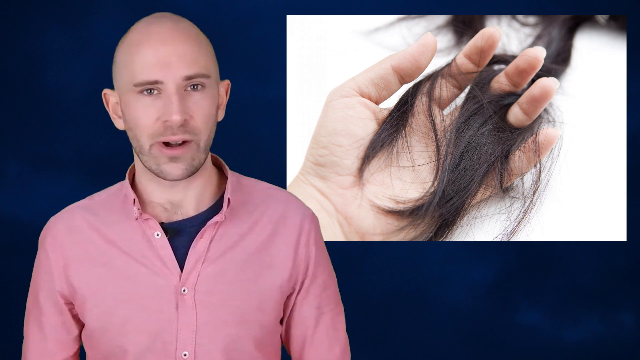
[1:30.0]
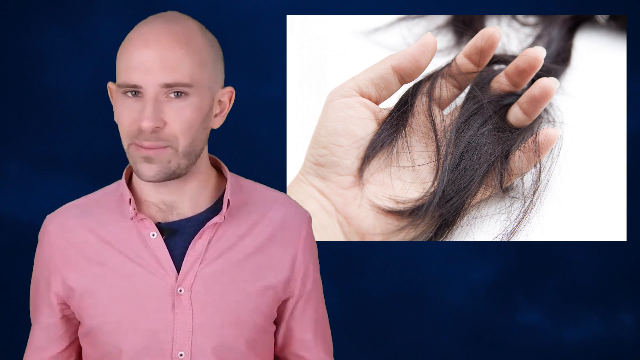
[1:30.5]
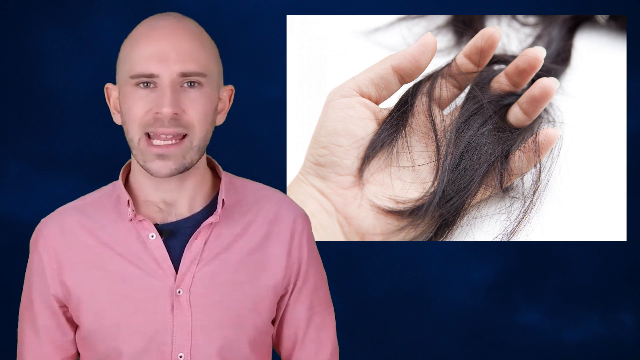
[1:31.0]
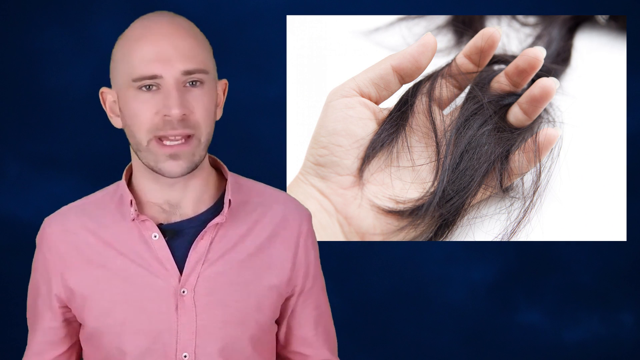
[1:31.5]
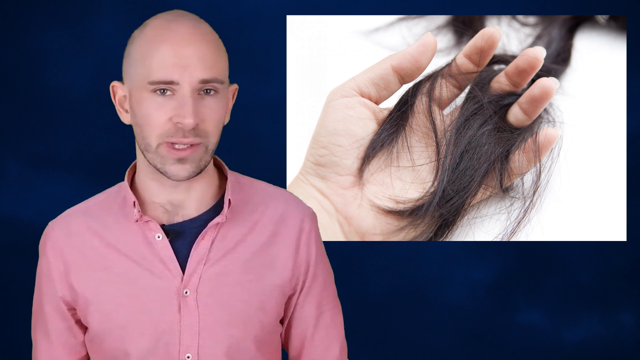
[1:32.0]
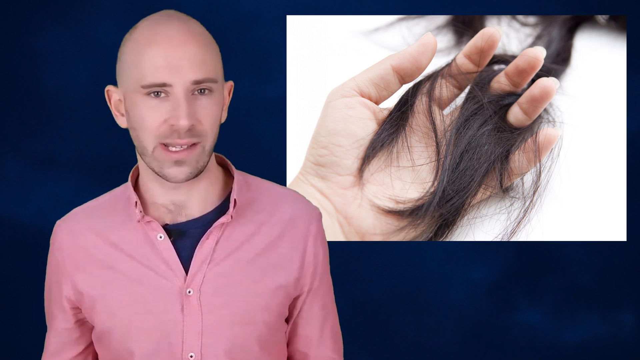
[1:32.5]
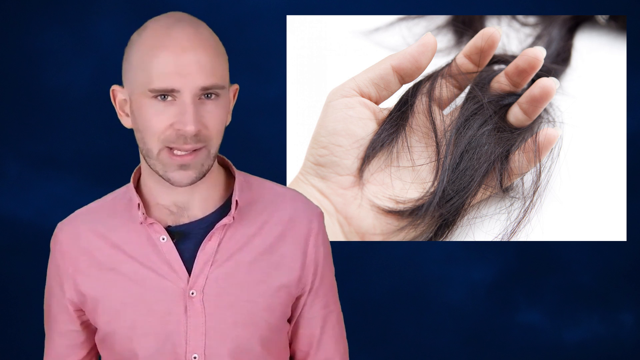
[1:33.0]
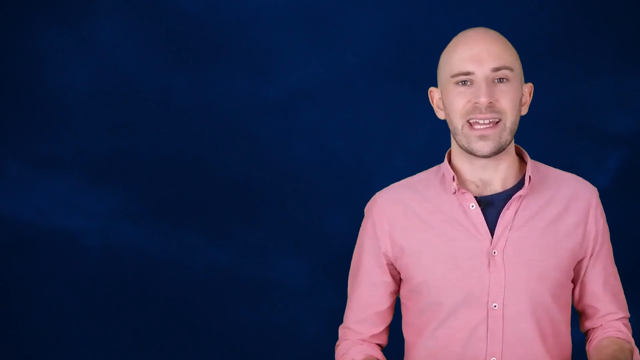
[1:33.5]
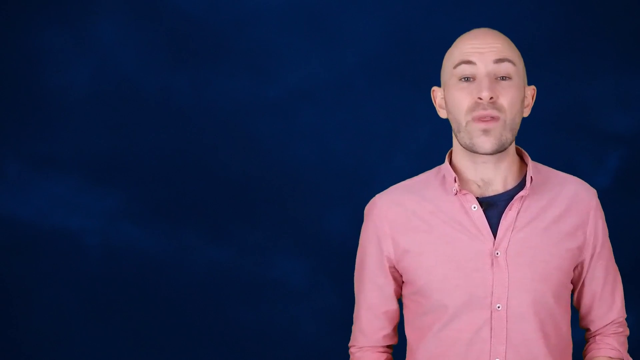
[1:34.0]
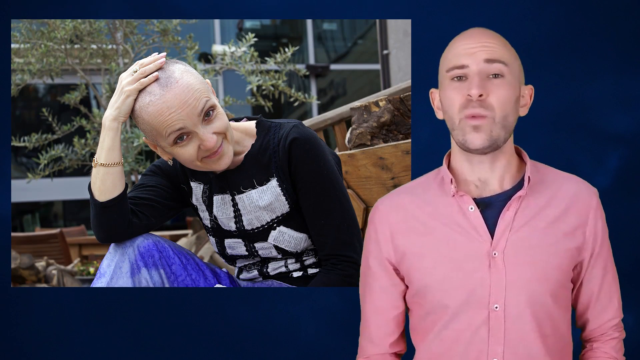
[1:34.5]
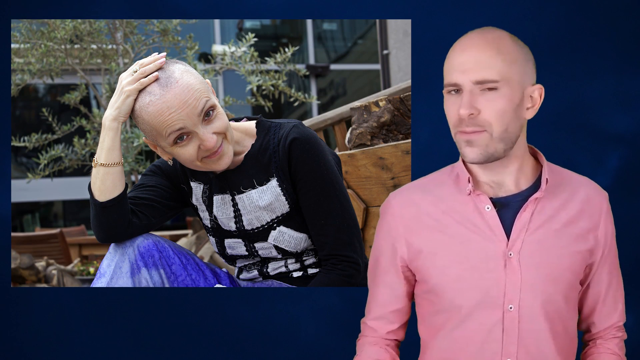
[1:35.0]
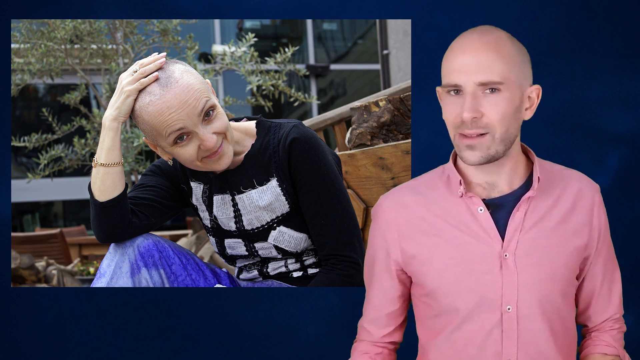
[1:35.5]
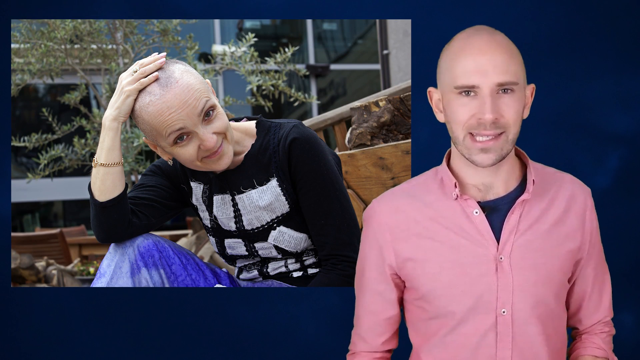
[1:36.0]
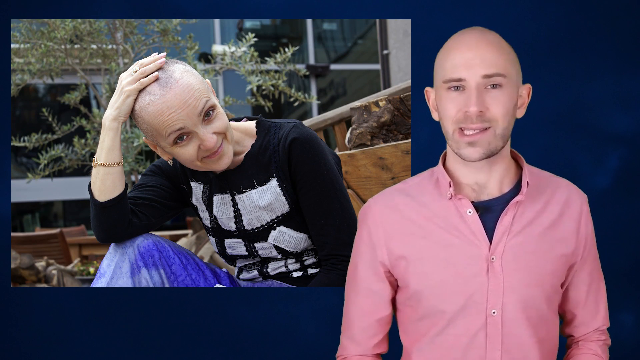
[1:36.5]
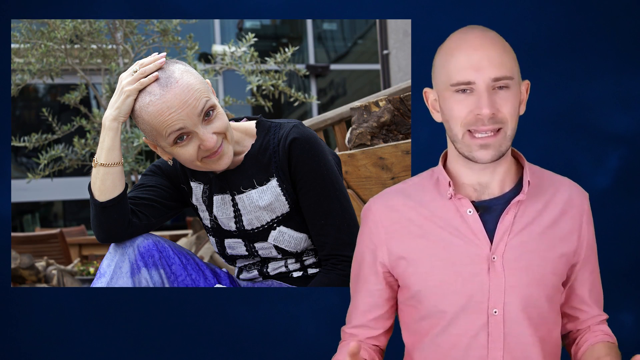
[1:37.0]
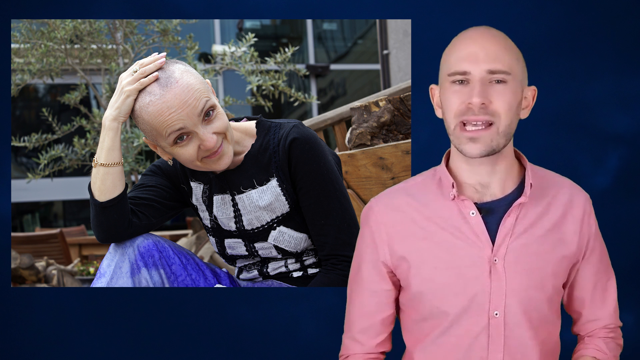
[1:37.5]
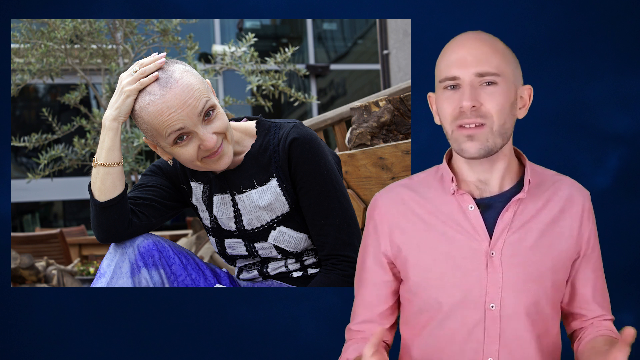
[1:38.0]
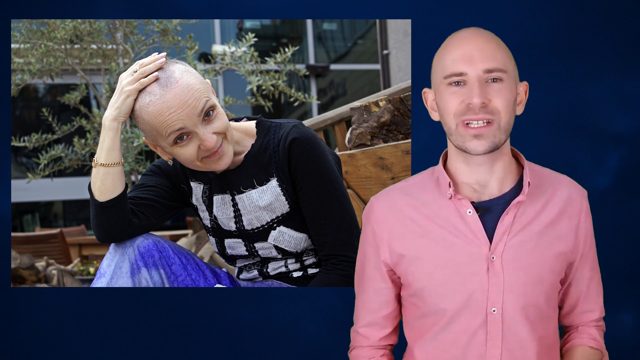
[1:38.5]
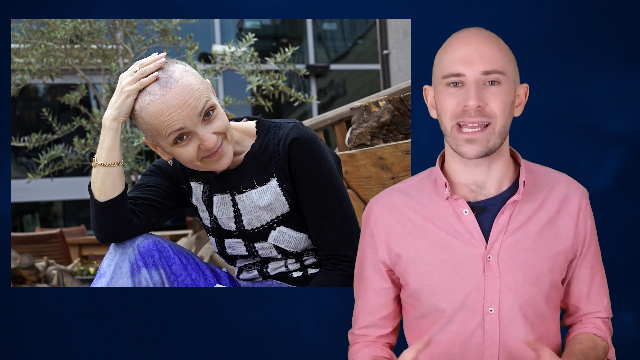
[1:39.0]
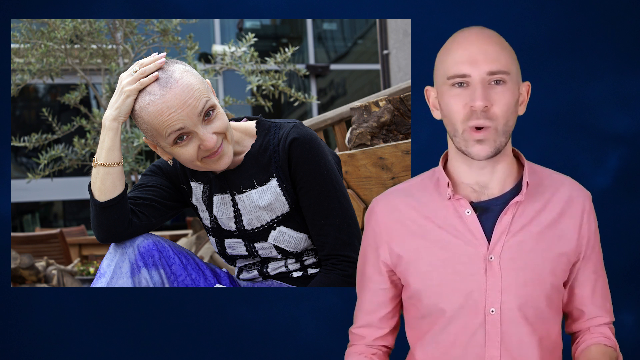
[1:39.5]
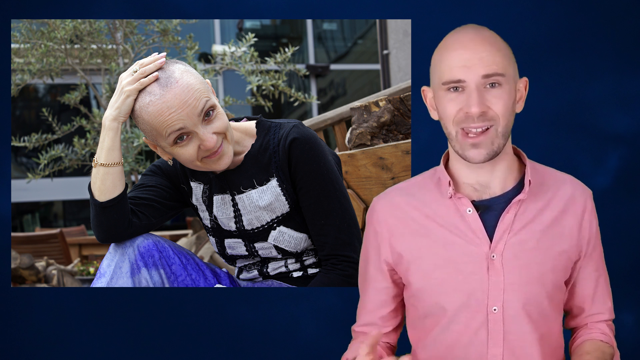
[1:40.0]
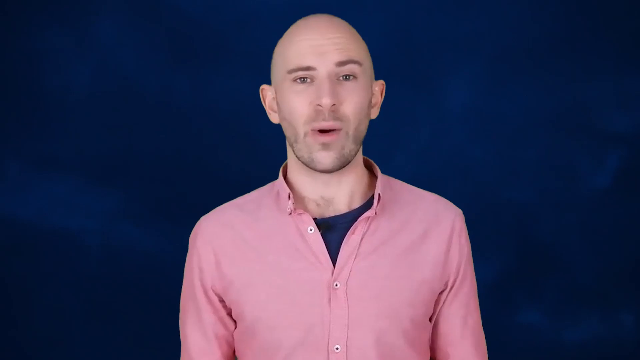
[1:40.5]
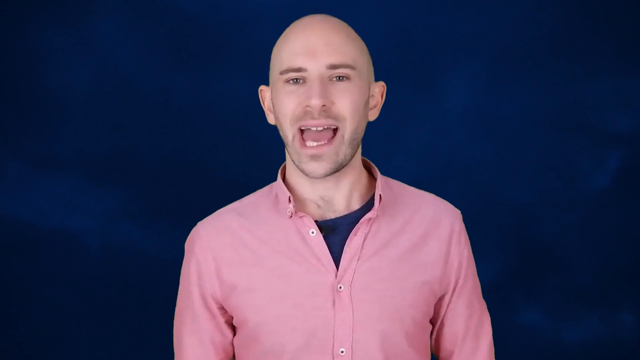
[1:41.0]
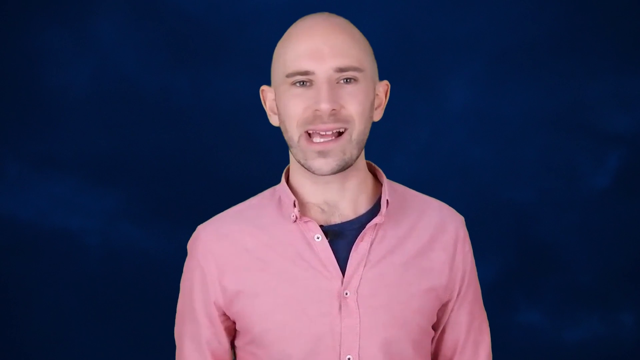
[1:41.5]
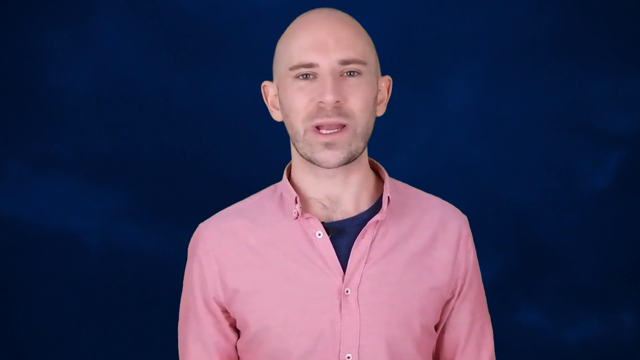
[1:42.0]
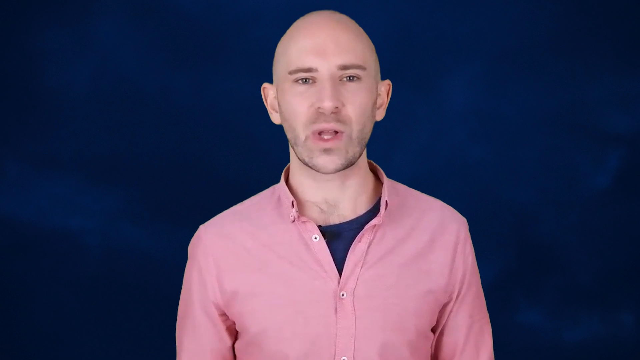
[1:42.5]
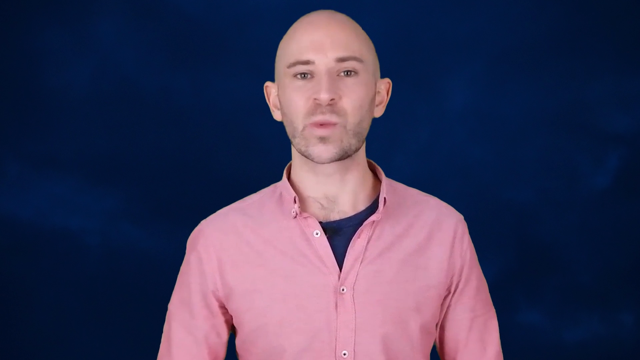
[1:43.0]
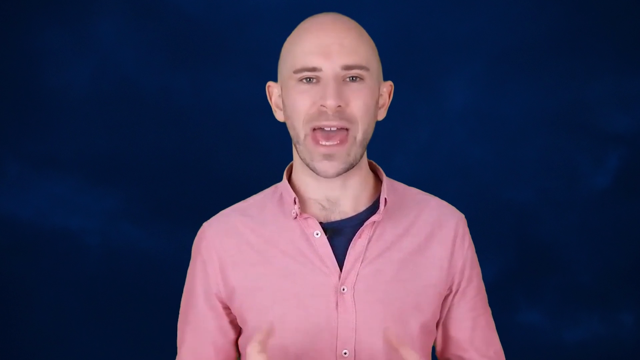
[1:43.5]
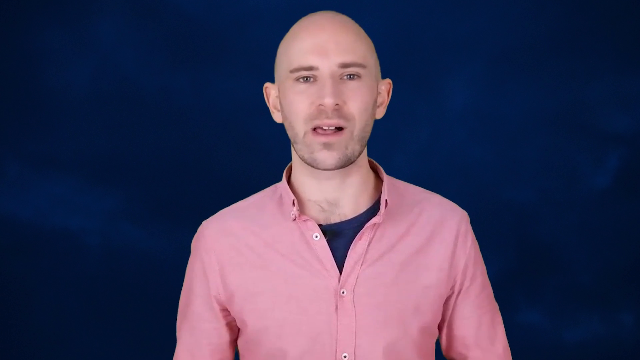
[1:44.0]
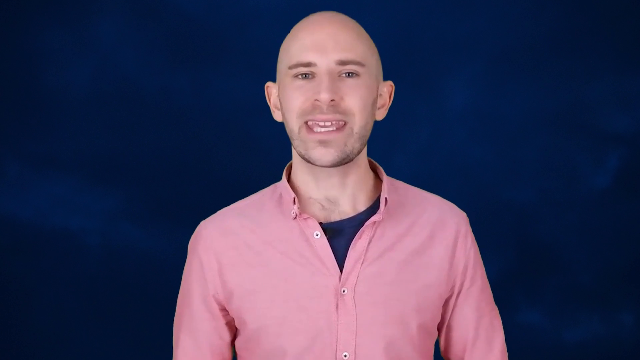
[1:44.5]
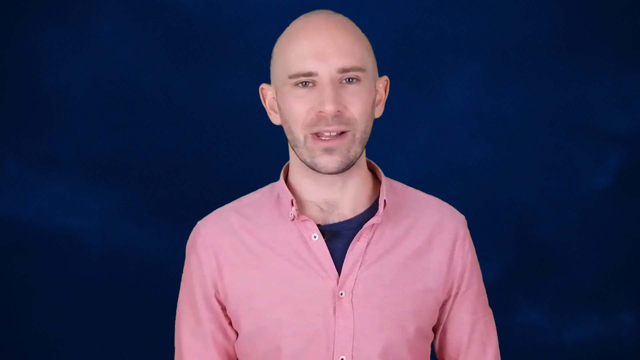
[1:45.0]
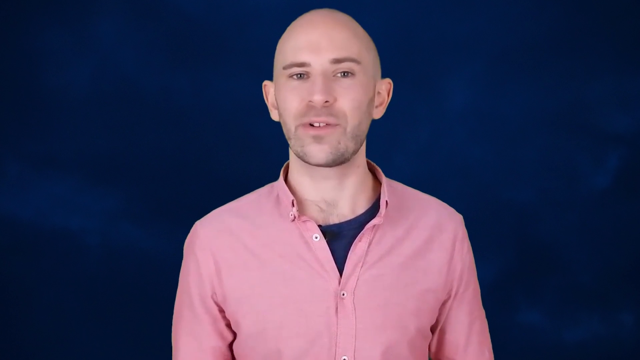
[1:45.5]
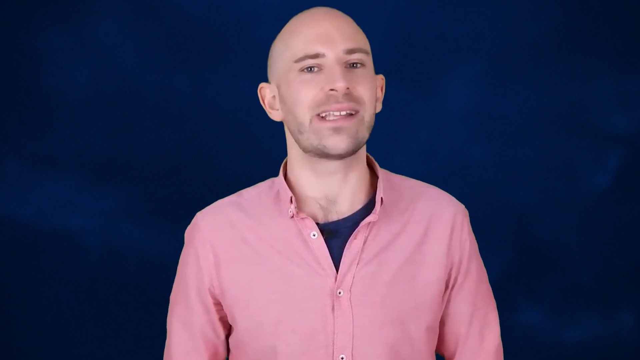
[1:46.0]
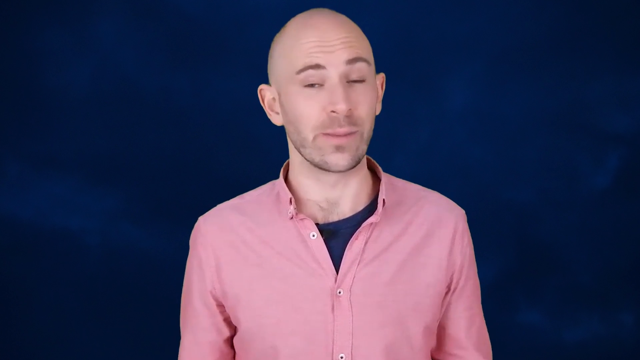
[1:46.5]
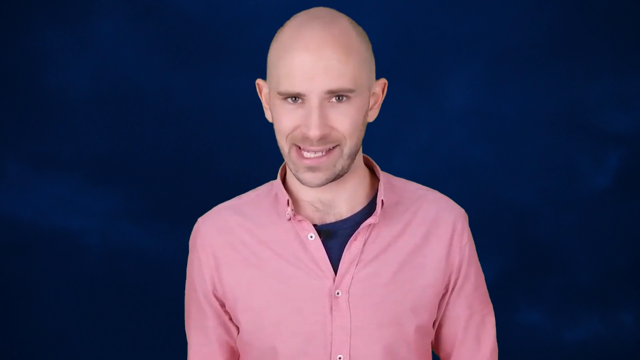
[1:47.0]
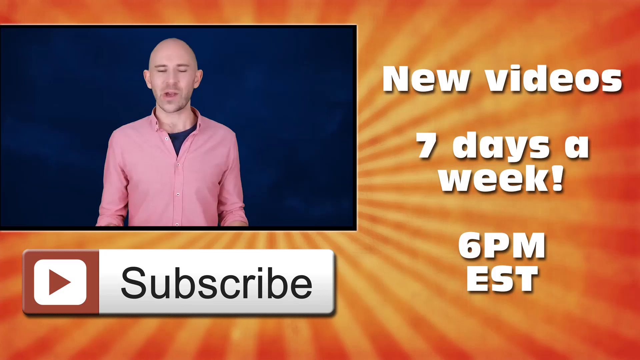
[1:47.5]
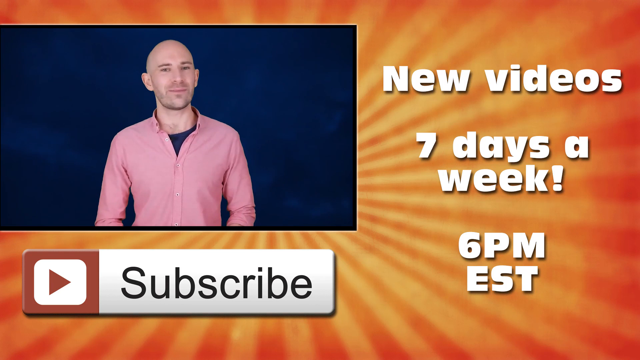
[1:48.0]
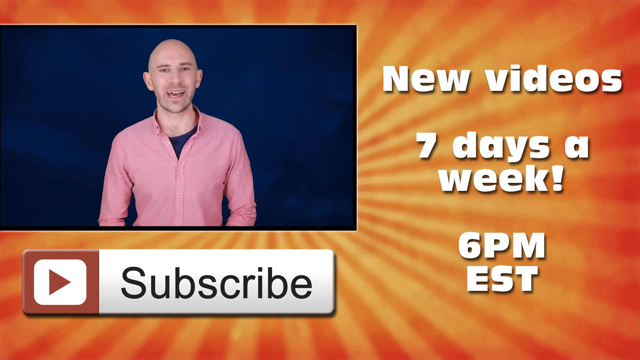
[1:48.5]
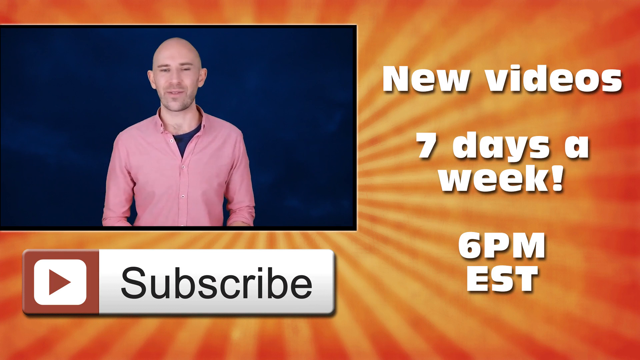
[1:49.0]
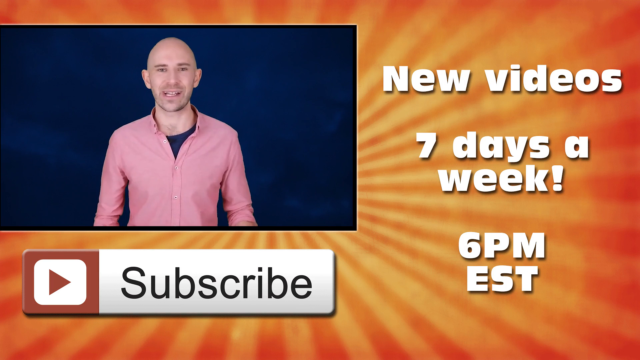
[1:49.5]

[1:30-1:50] The bald-headed man in a pink shirt with a black t-shirt underneath stands in front of a blue background. To his right is an image of a hand holding chunks of dark brown human hair. An image then appears to the left of a woman with no hair, with a hand placed on her head. She wears a black t-shirt and is smiling. Behind her is a fern tree, and there is a window where she is seated. The video then transitions to frames with text on the right side reading "new videos", "7 days a week" and "6 pm EST", all written in white.